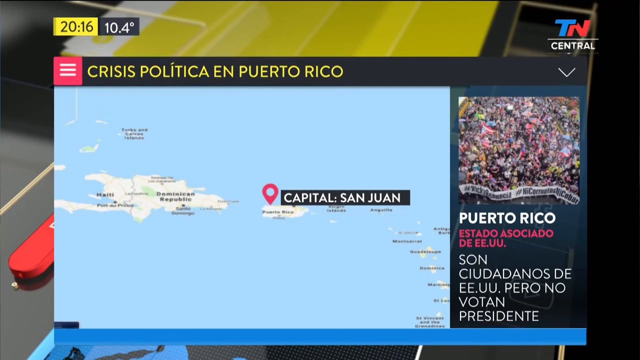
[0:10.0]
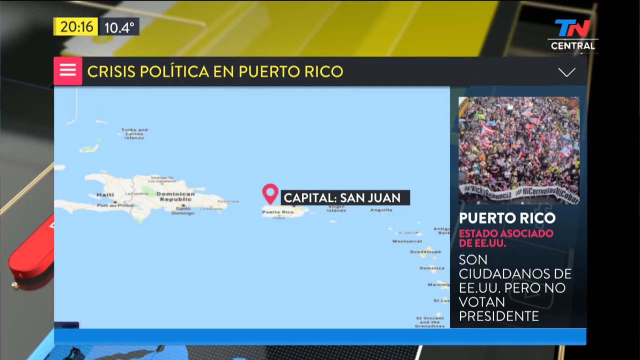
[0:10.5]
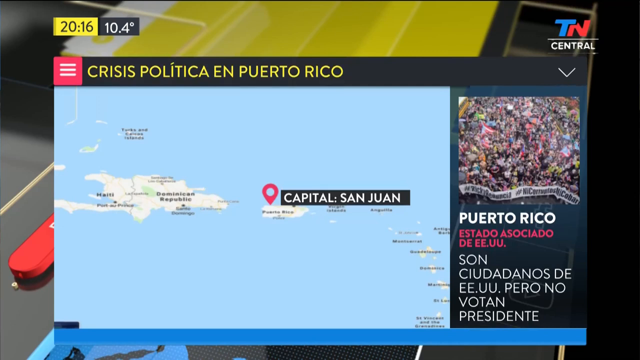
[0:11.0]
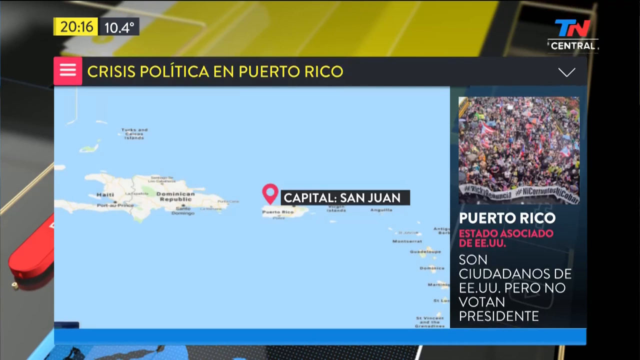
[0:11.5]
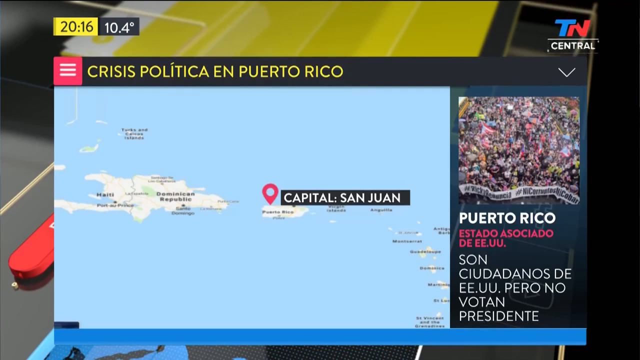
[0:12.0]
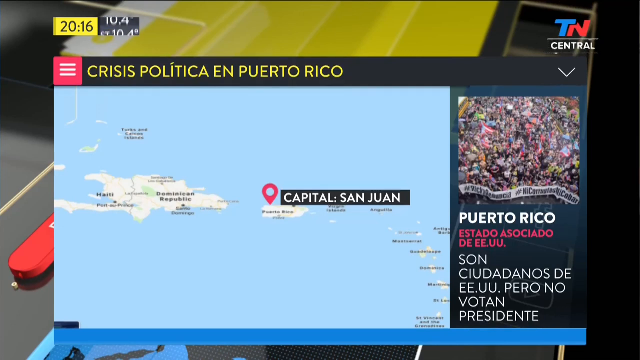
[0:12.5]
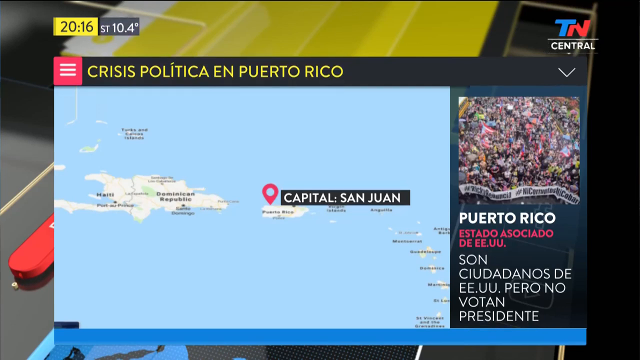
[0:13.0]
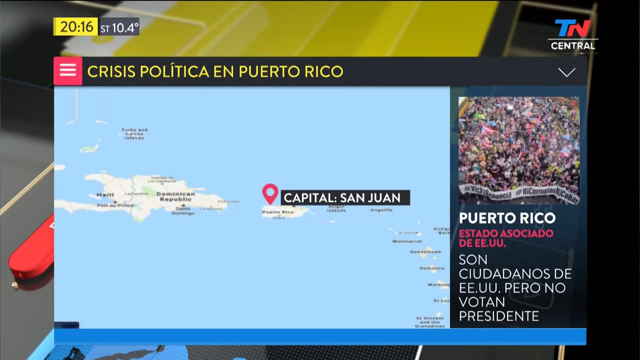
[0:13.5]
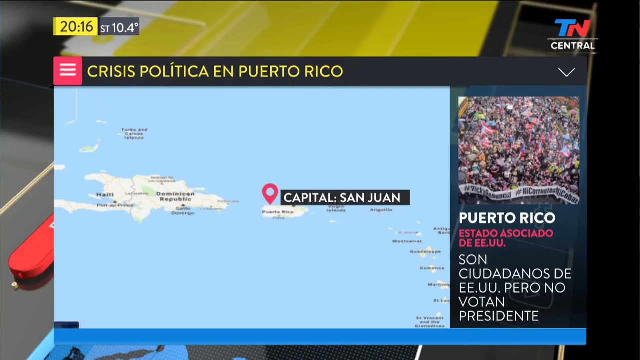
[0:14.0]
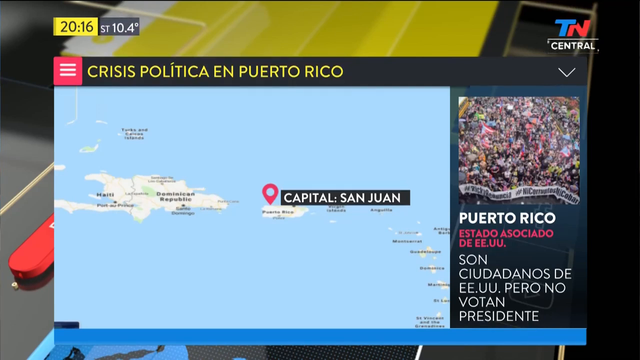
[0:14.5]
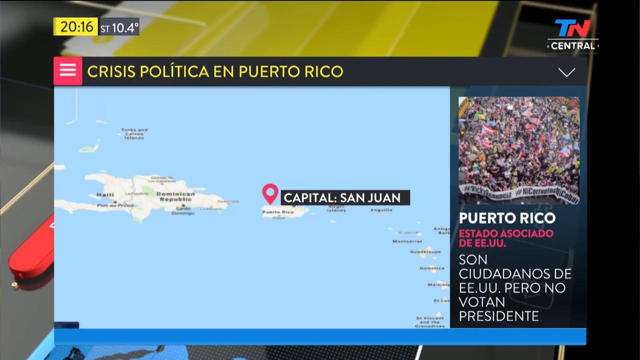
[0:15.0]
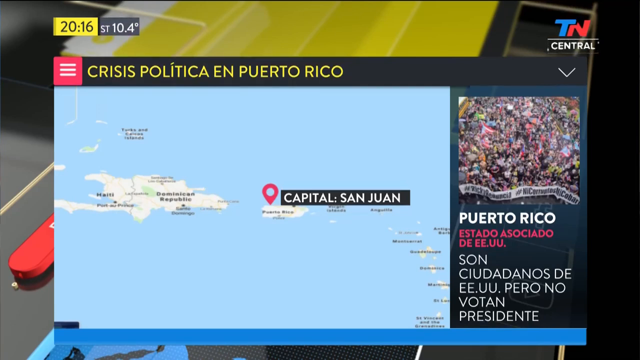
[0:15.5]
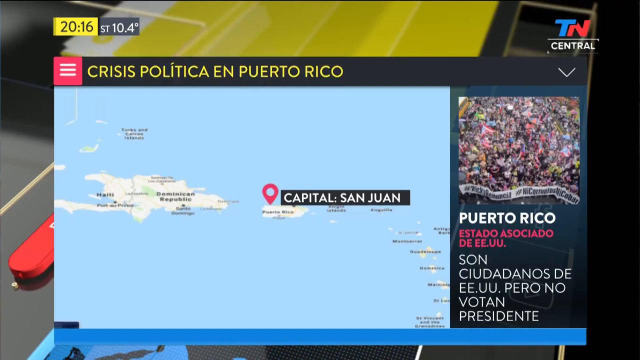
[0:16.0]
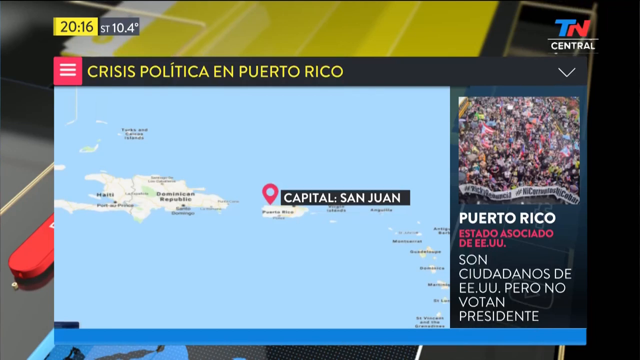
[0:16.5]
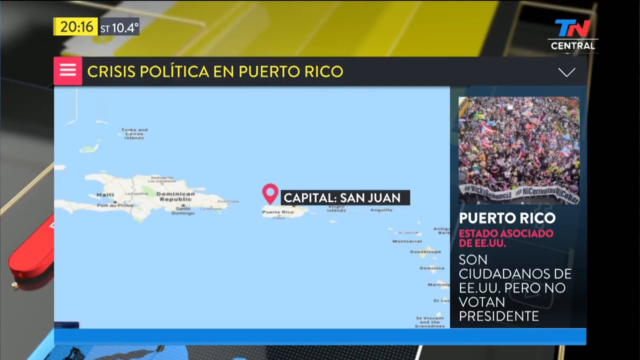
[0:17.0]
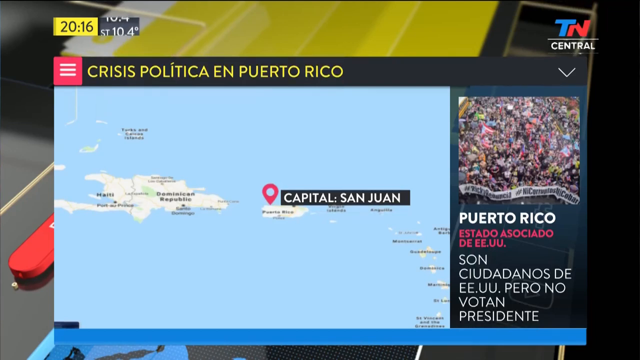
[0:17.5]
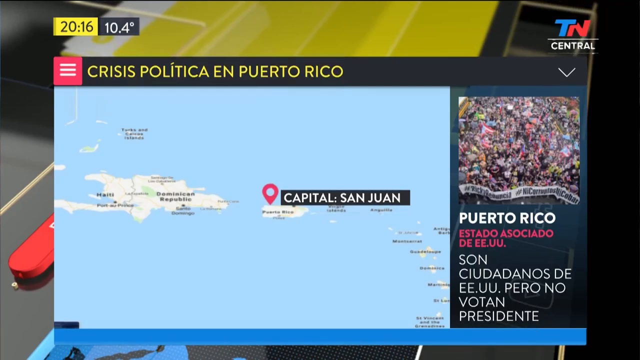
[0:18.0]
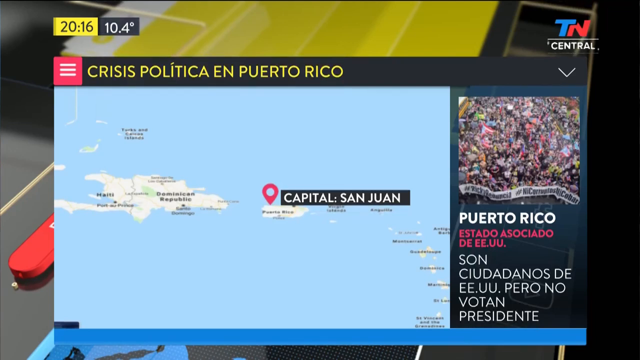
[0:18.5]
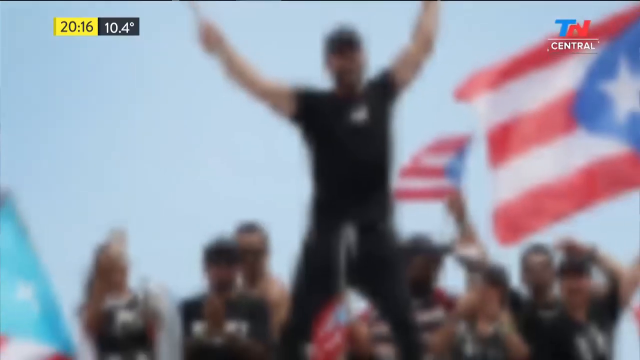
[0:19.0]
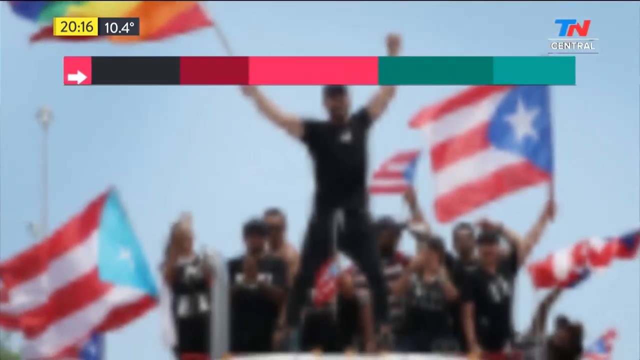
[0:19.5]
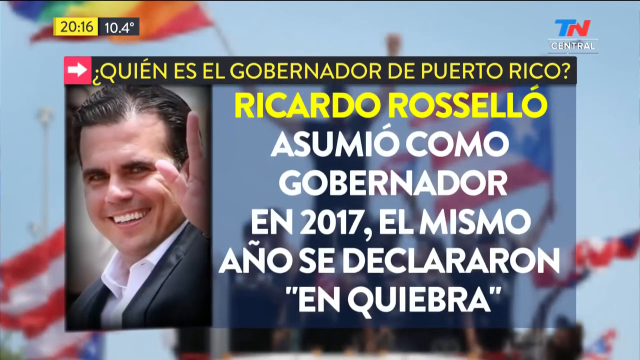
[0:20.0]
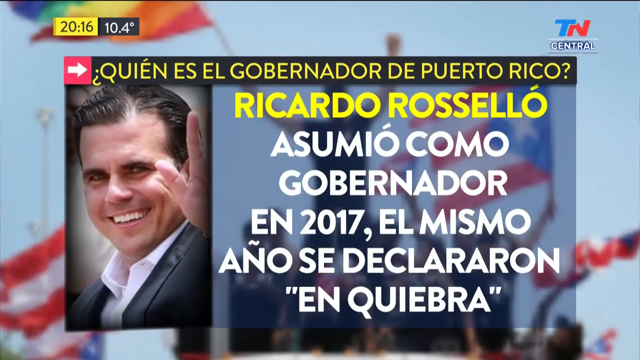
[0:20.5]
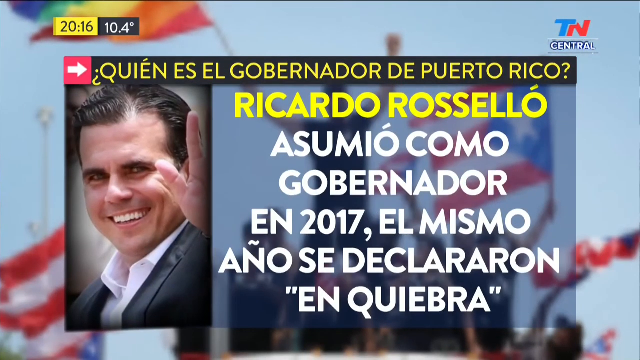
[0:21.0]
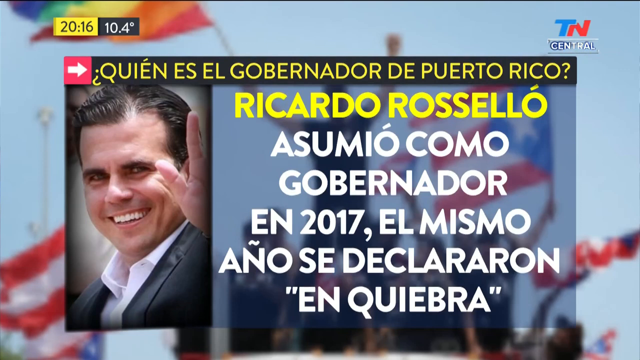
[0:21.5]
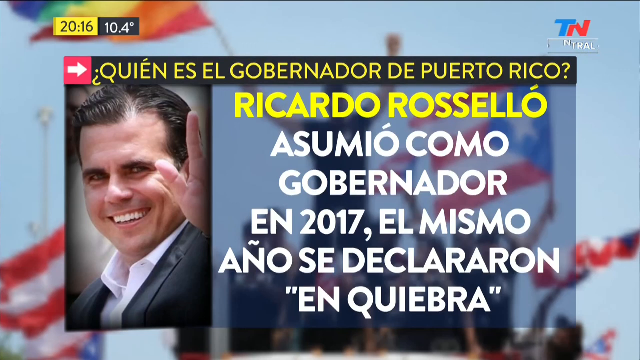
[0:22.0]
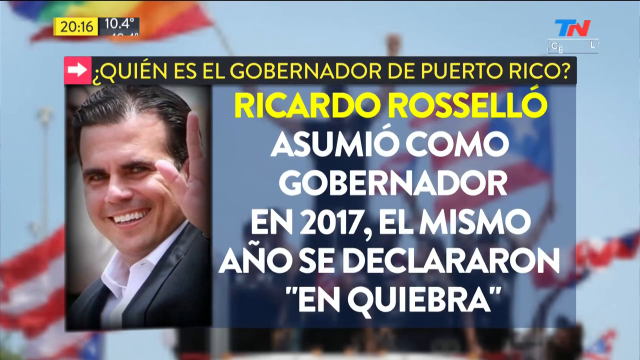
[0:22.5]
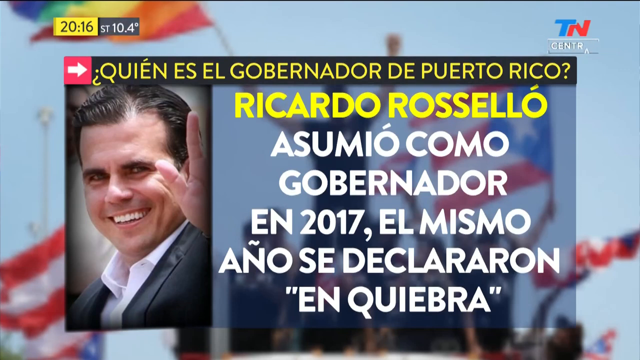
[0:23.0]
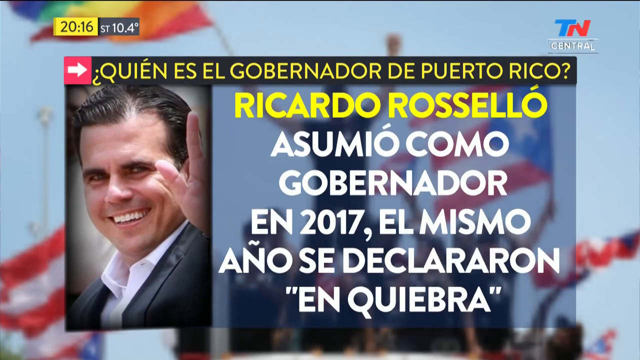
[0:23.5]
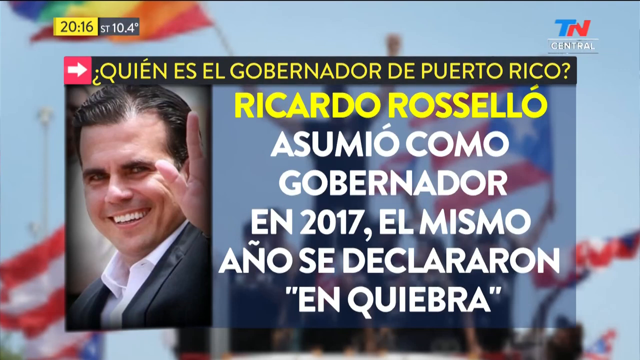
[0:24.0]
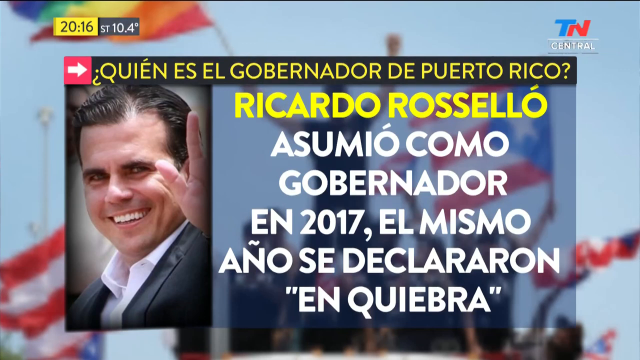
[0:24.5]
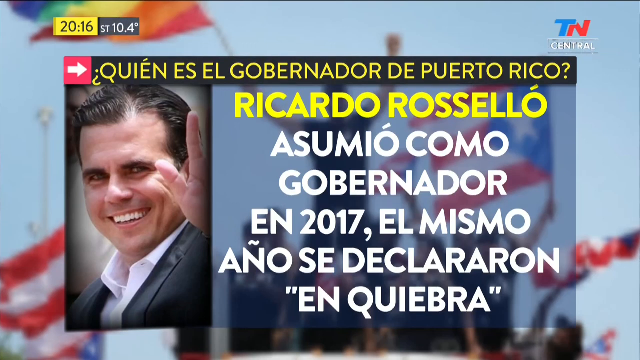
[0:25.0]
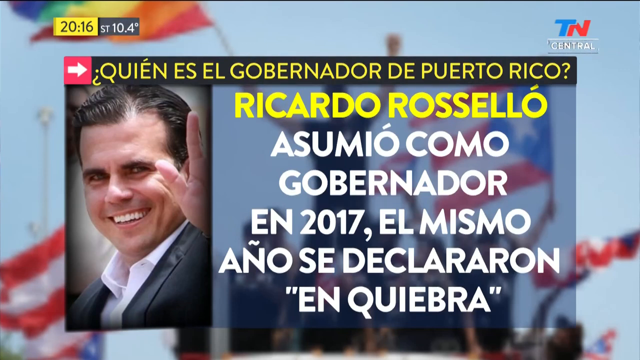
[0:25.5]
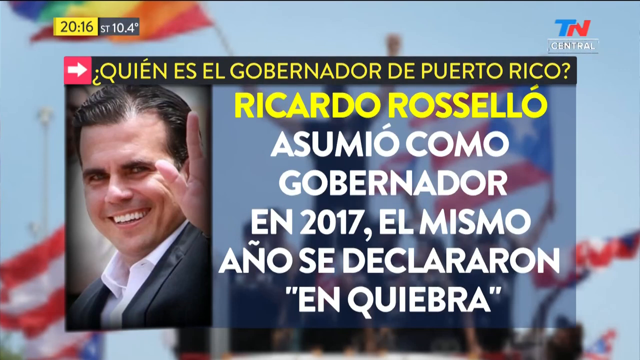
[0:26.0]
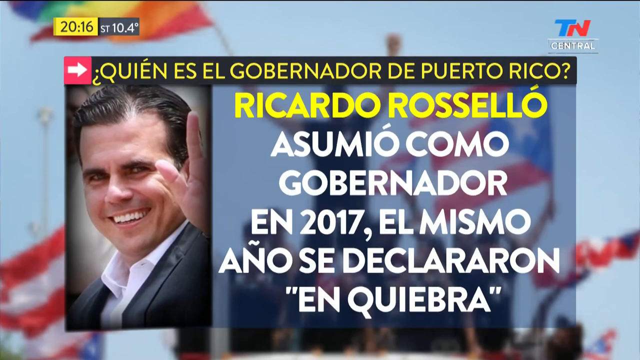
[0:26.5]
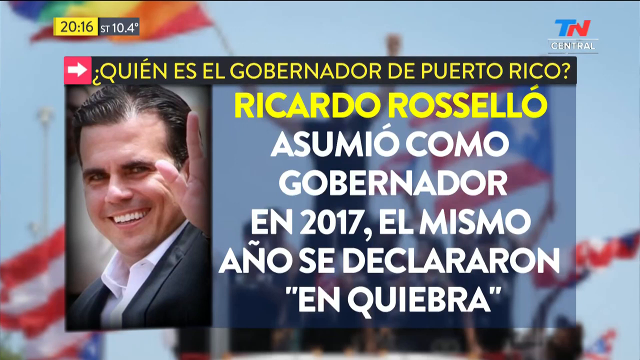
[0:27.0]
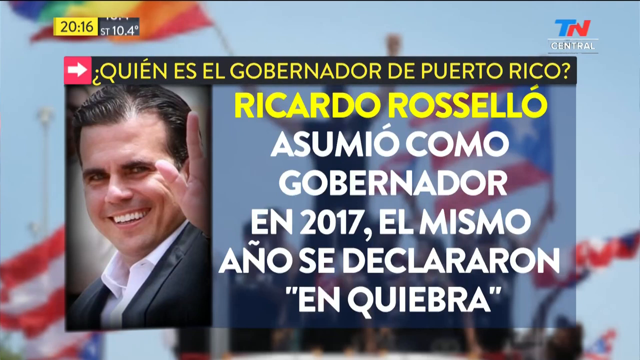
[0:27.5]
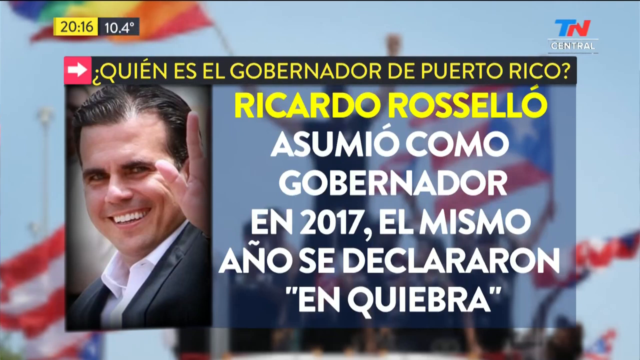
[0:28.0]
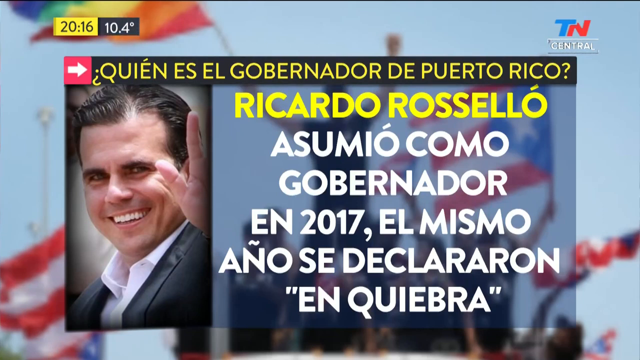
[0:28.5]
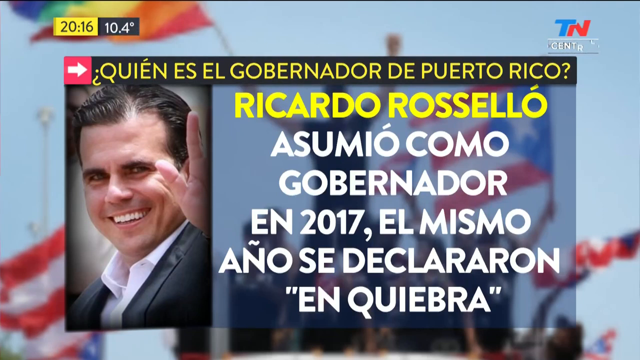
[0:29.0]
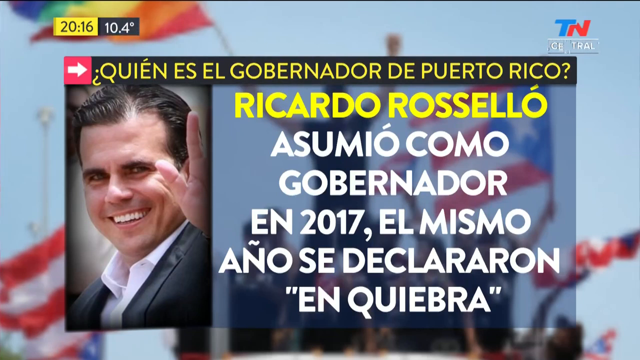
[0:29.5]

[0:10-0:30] The capital, San Juan, is indicated, and the video shows "Estado Associado de EU". The footage is apparently from TN Central. It may not be a protest but rather a campaign, possibly for a candidate, with people out in large numbers. People are moving around, standing and apparently campaigning, in what seems to be a political situation in Puerto Rico.